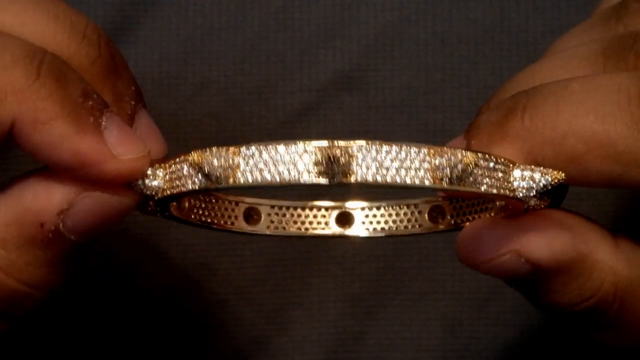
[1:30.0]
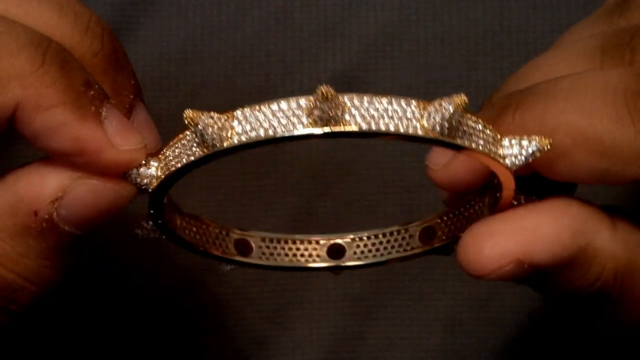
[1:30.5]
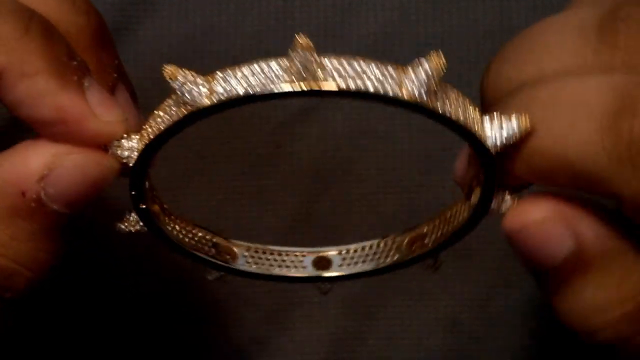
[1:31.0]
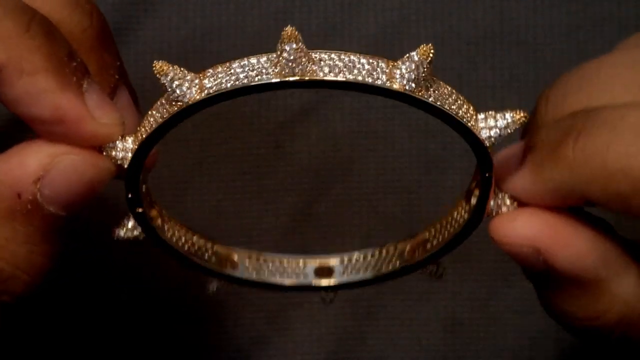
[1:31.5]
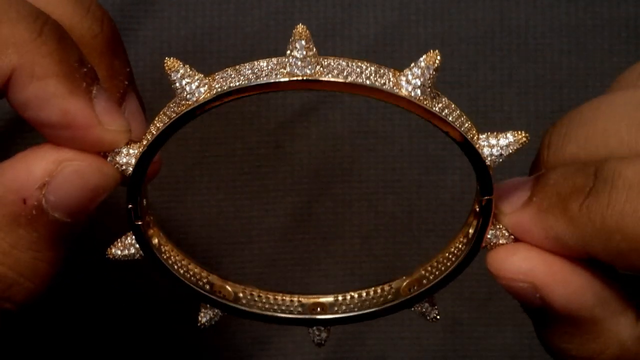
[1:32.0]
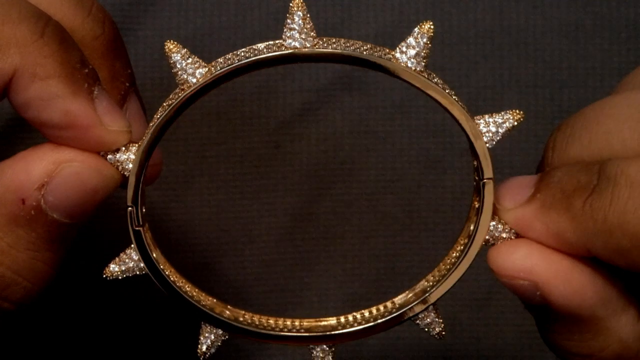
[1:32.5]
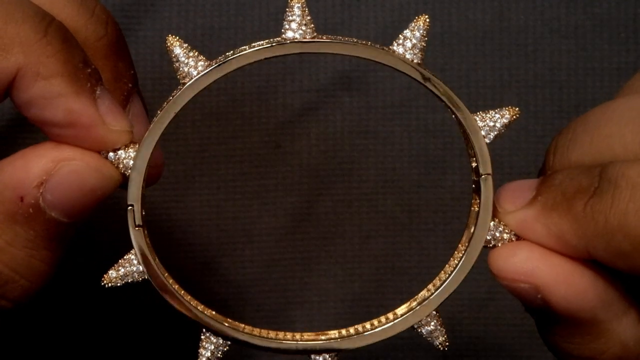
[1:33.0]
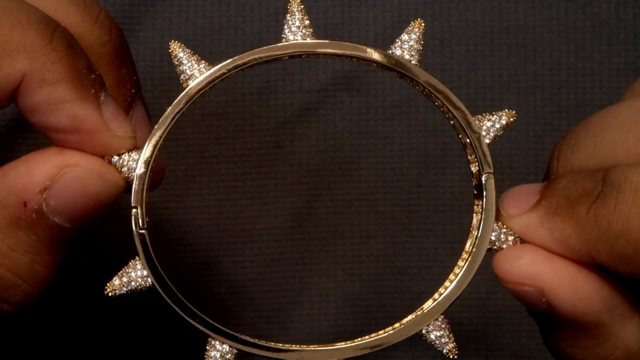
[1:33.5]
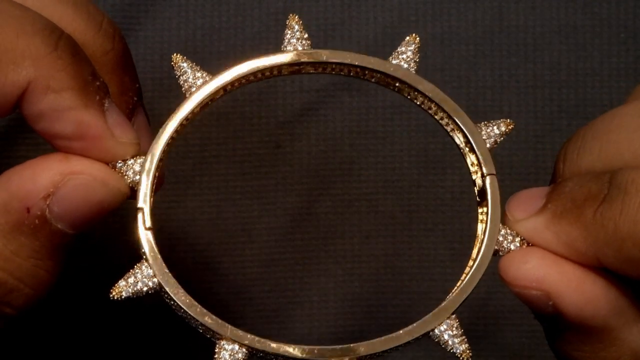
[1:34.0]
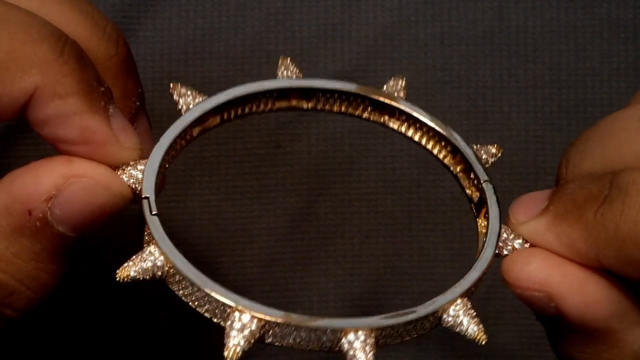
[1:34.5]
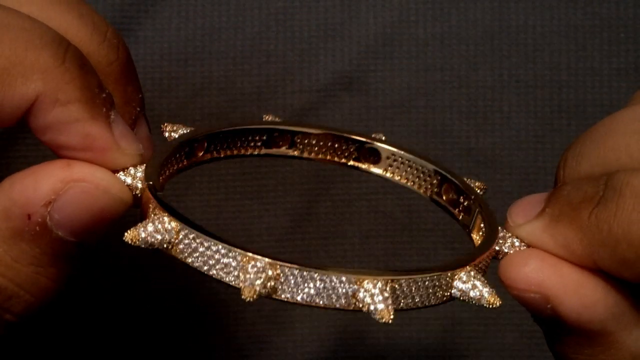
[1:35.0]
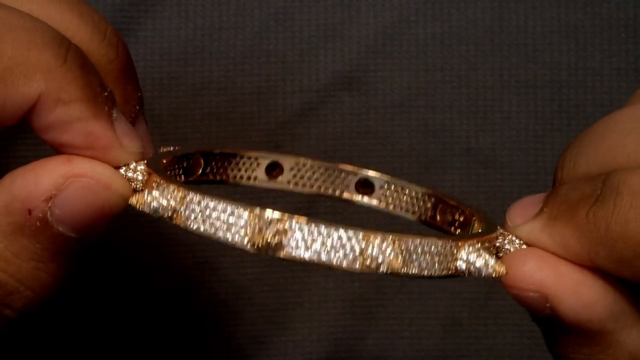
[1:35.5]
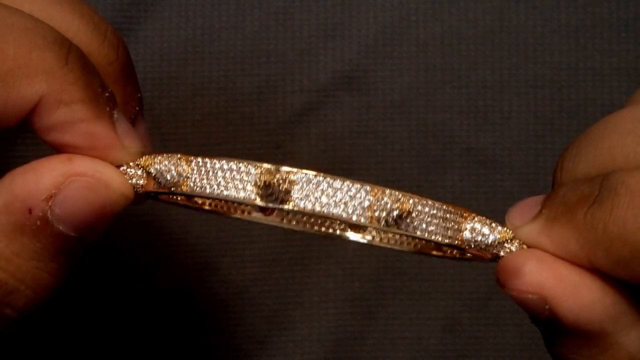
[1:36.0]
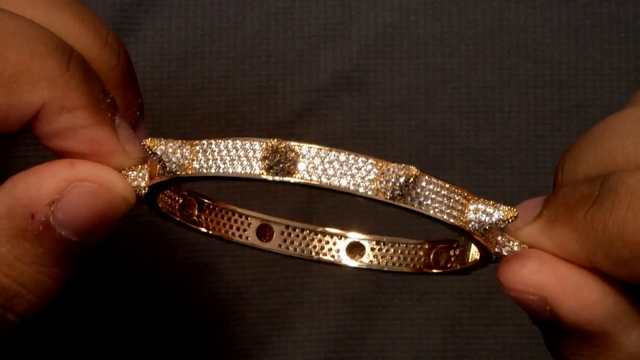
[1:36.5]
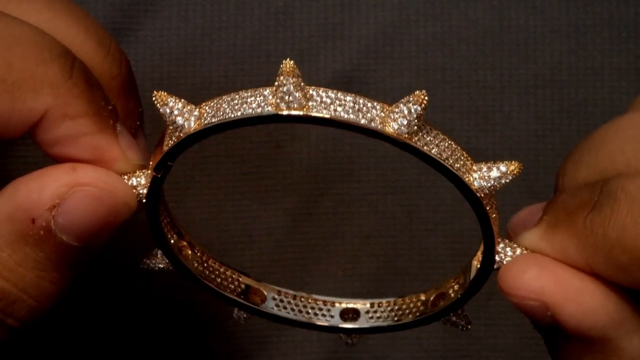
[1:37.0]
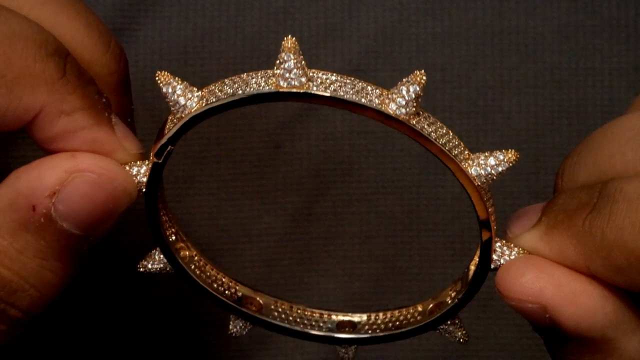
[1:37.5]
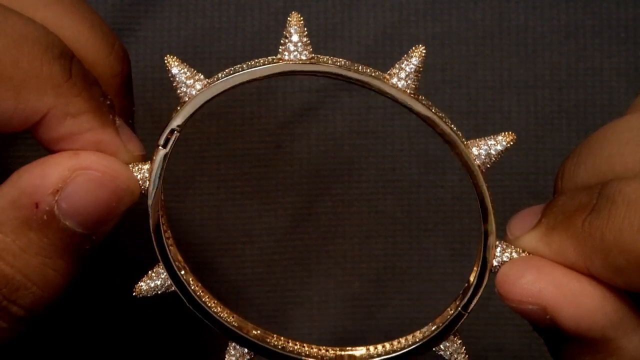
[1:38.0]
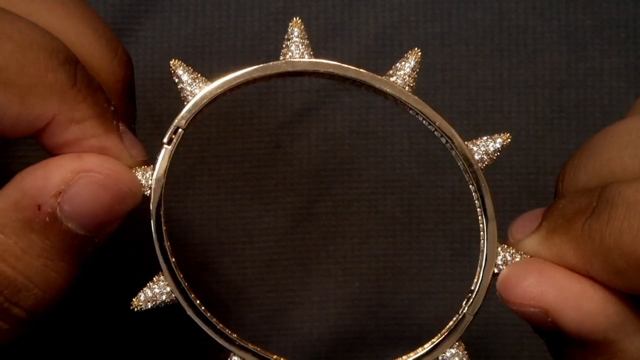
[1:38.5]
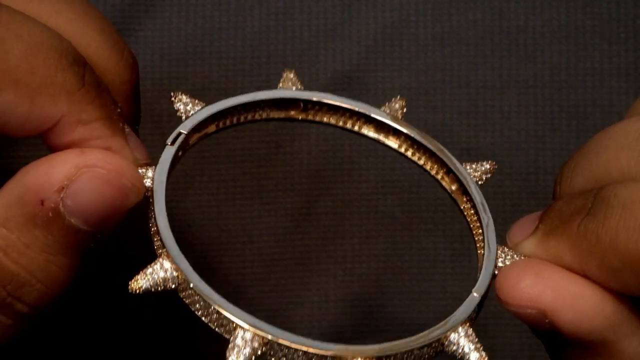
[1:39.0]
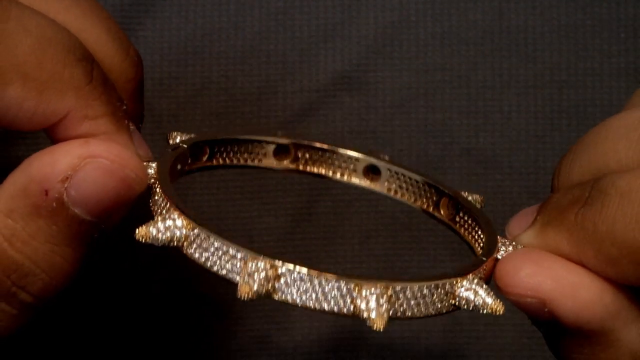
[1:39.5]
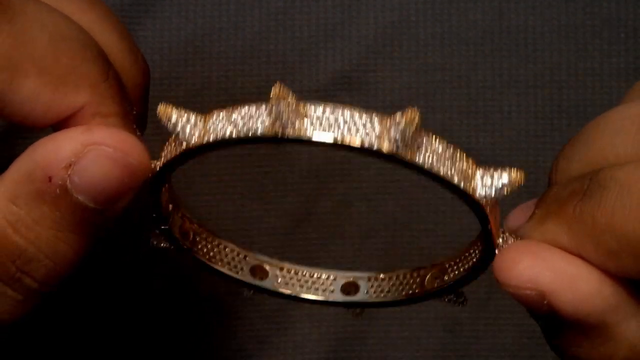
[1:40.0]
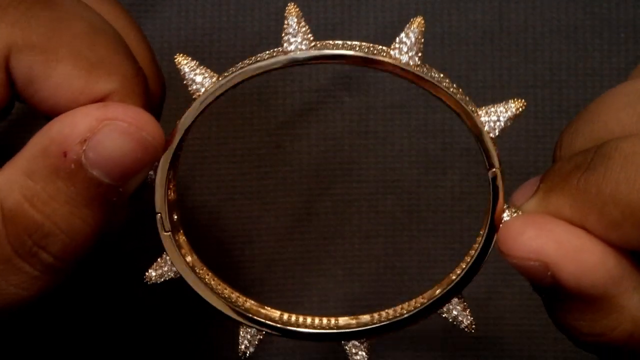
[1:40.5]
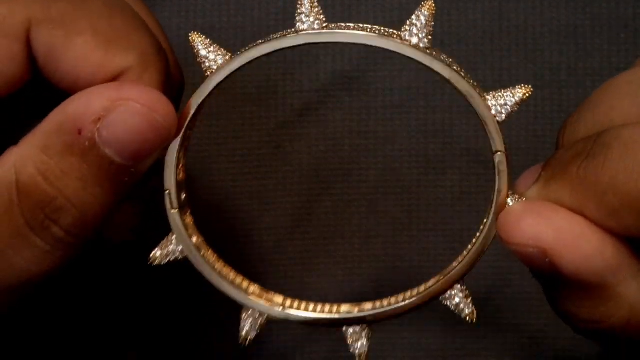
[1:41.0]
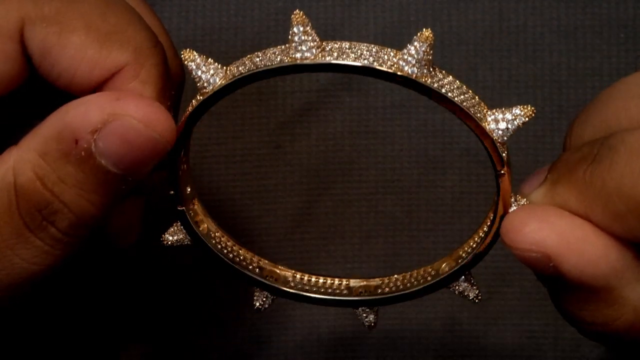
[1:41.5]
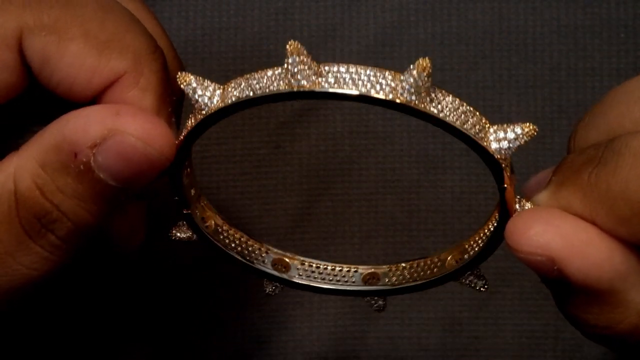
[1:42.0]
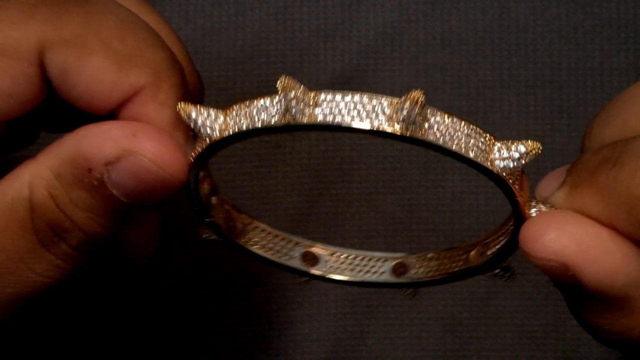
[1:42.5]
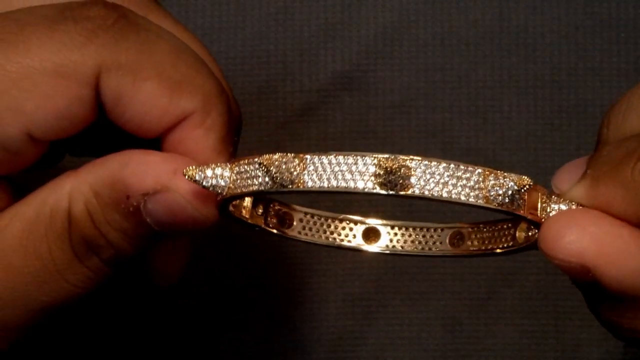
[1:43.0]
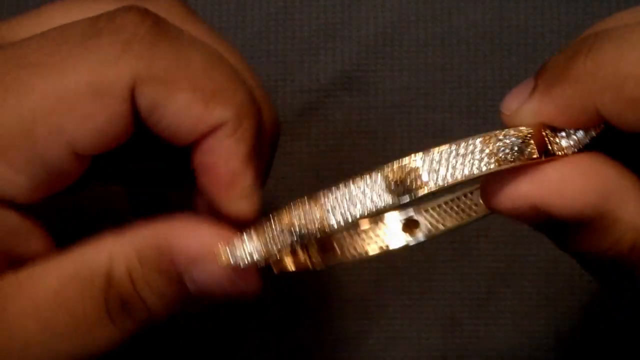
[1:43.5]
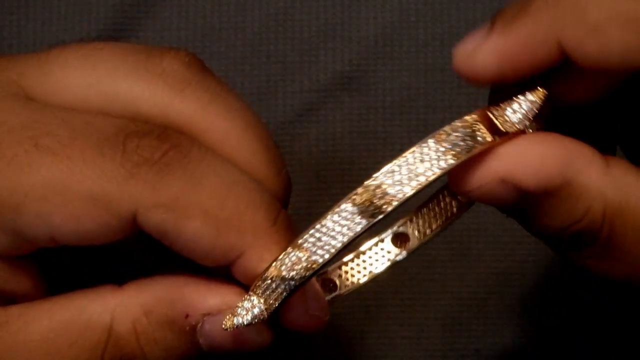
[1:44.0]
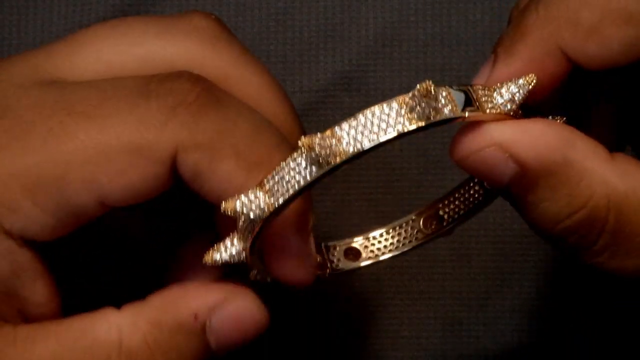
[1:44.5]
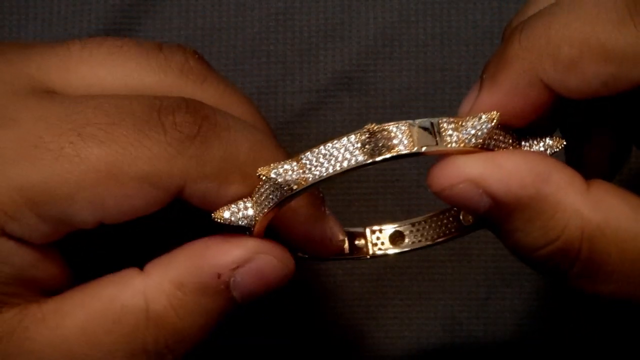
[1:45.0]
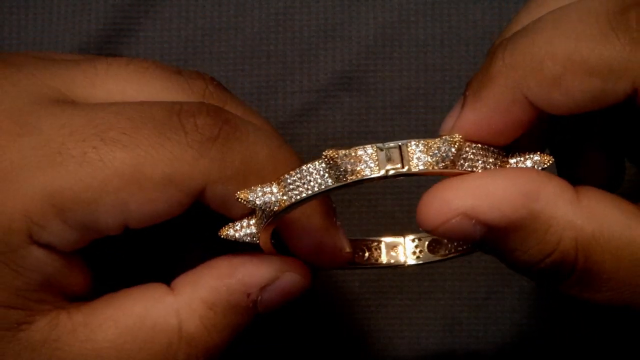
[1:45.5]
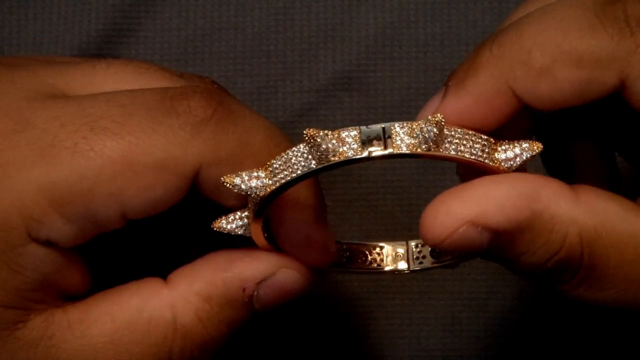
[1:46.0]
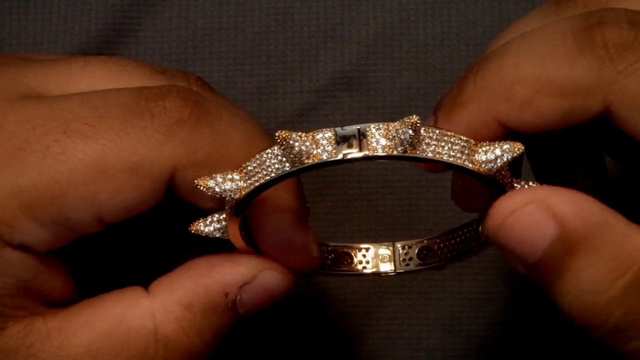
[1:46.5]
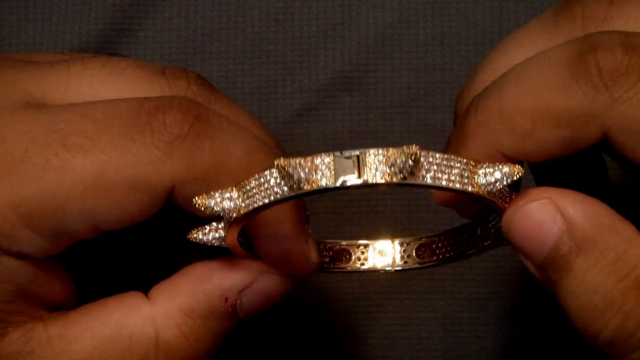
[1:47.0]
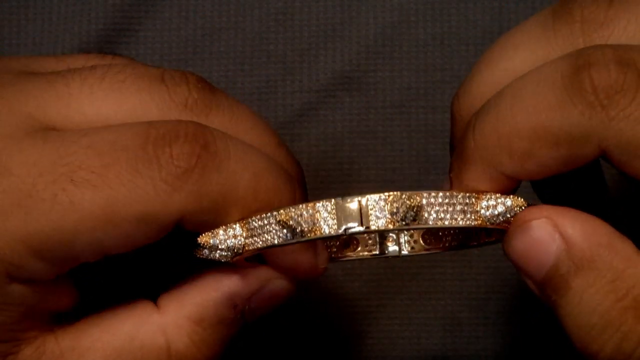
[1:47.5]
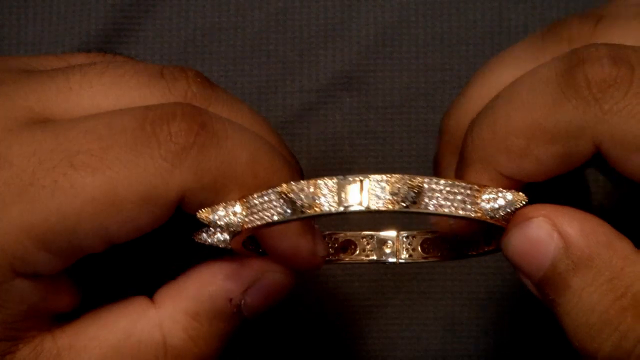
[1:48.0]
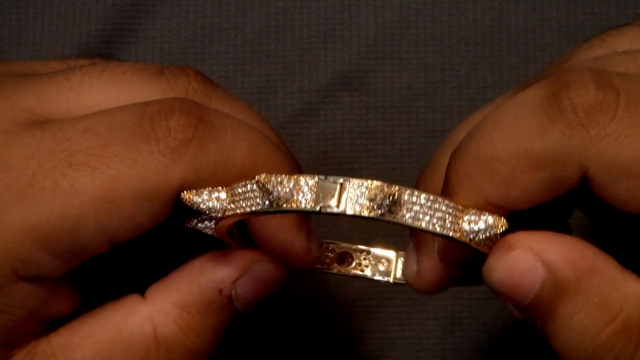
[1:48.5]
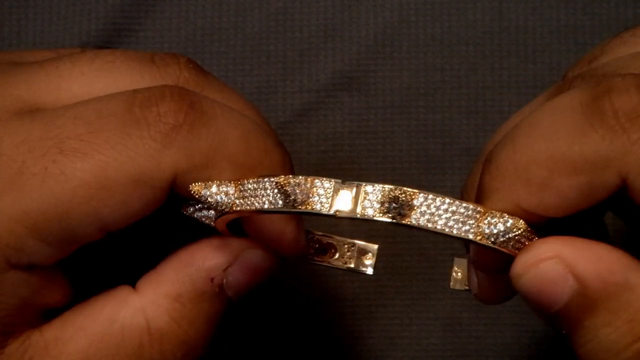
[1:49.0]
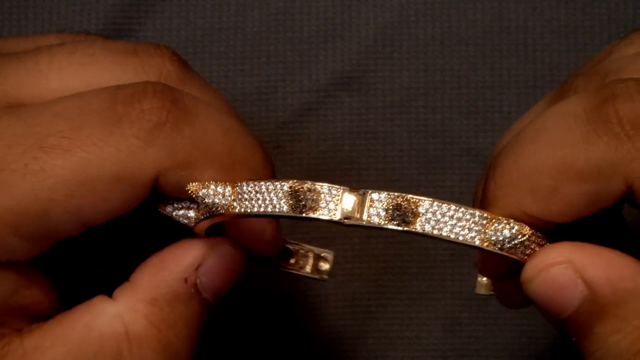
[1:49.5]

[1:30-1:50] He keeps moving and turning the bangle around, showing every part of it. Many holes are visible inside, along with the sharp things coming out. When it is opened, one side bends.